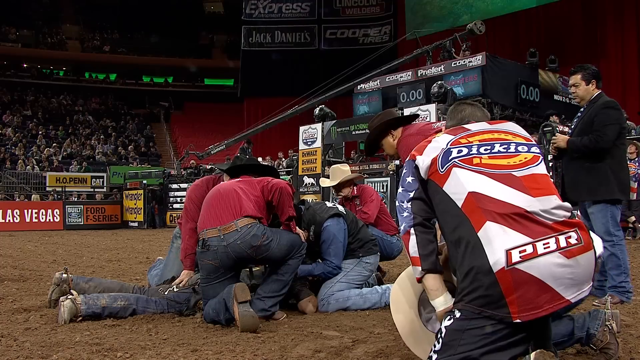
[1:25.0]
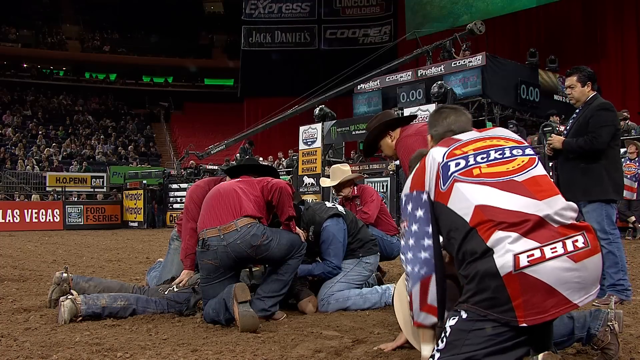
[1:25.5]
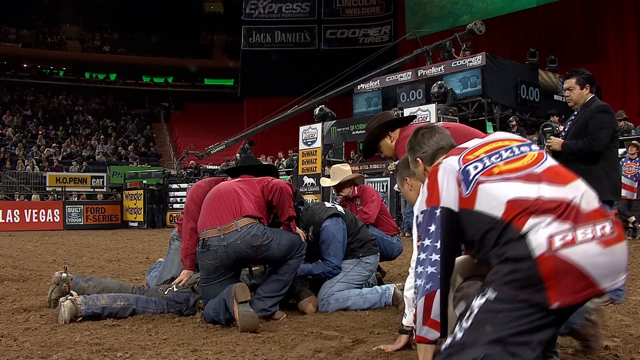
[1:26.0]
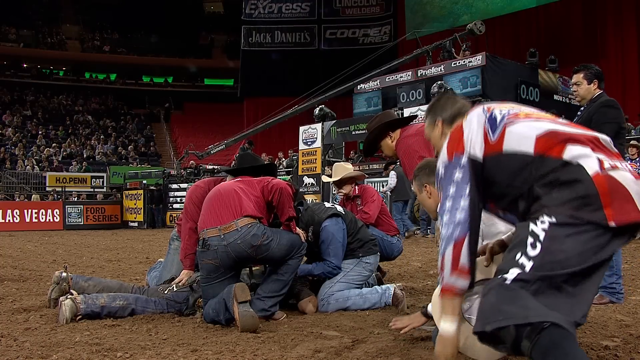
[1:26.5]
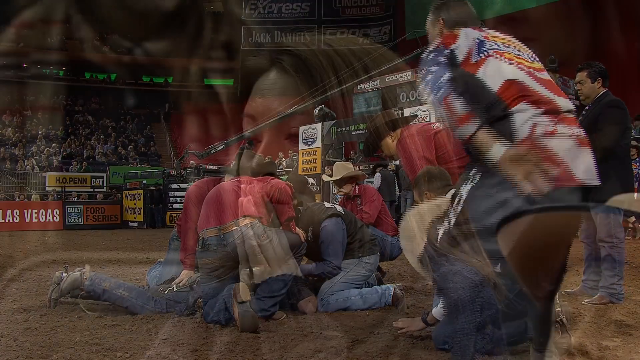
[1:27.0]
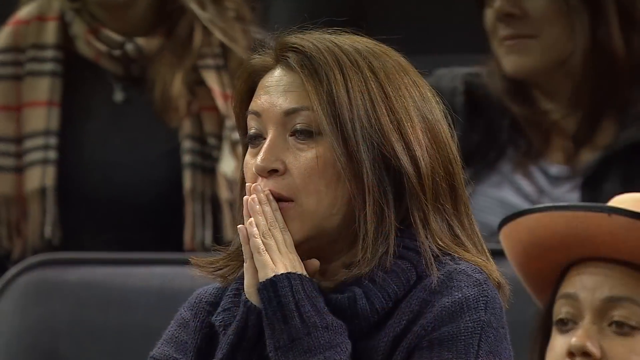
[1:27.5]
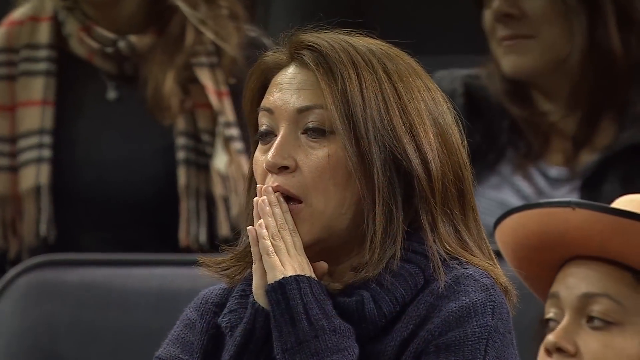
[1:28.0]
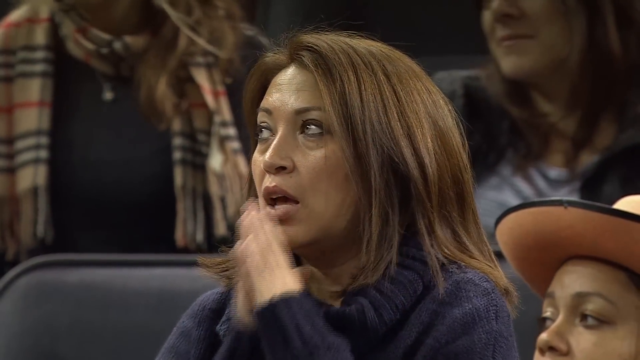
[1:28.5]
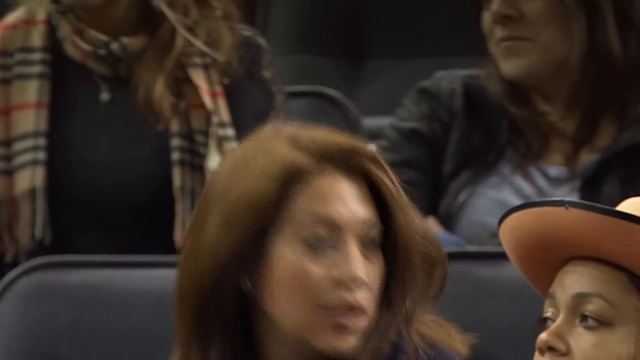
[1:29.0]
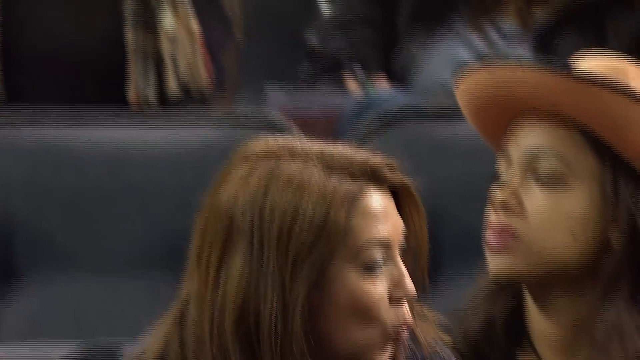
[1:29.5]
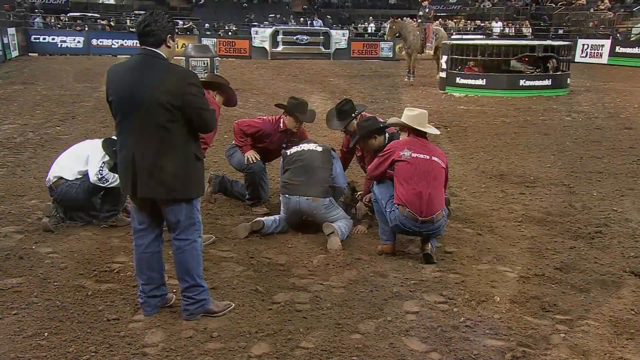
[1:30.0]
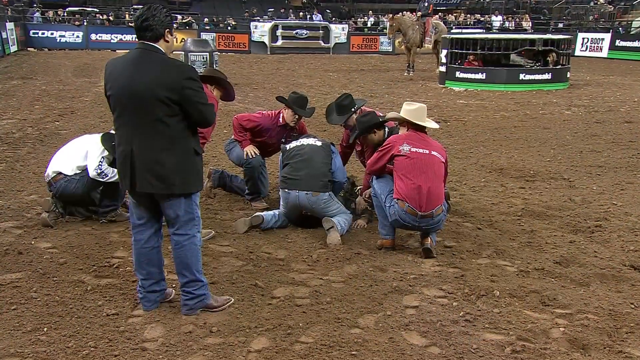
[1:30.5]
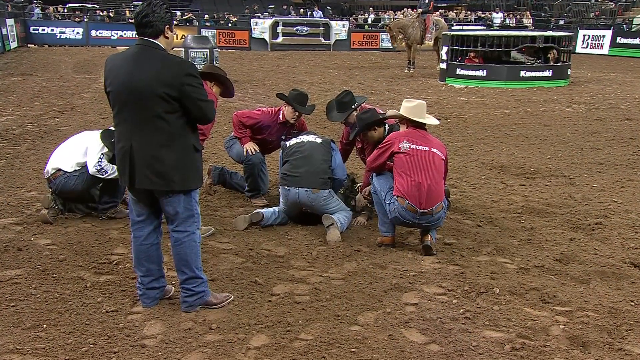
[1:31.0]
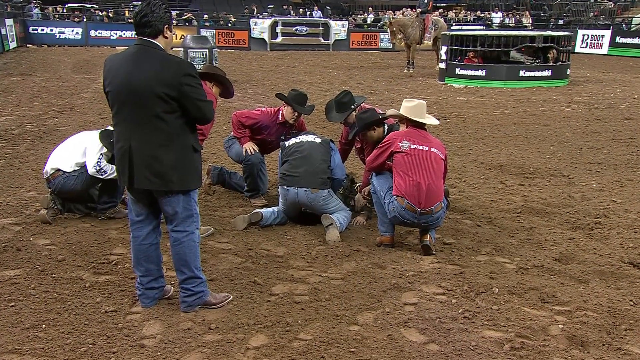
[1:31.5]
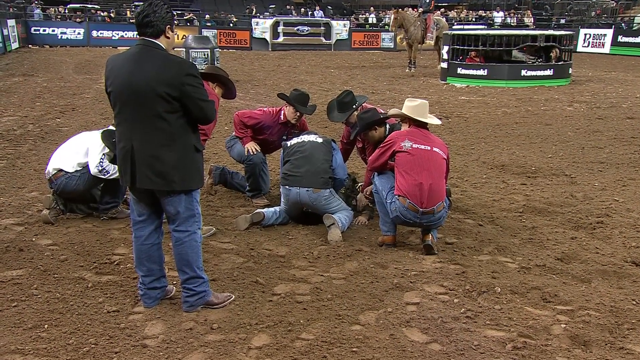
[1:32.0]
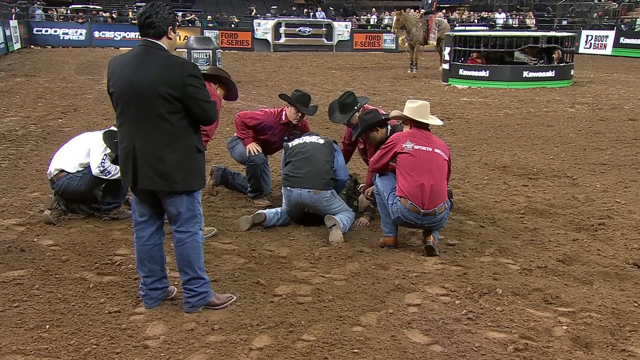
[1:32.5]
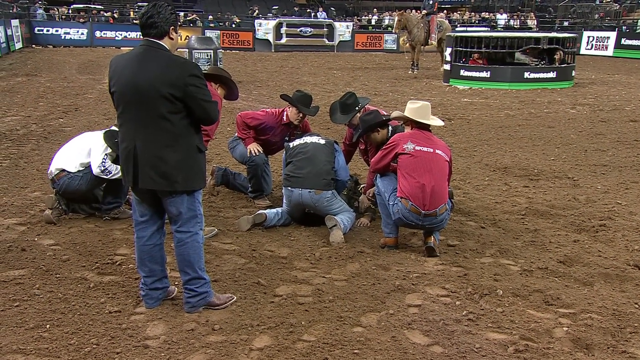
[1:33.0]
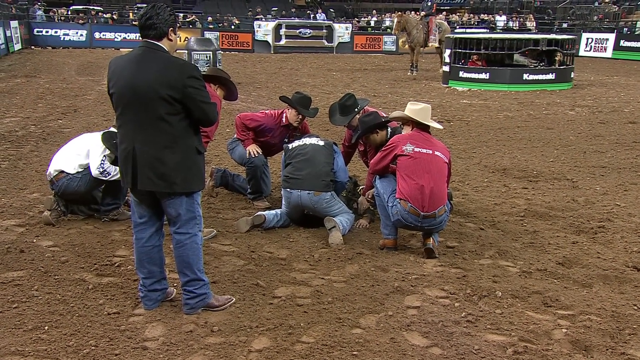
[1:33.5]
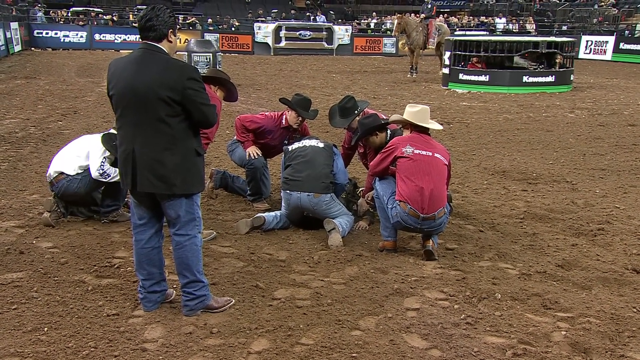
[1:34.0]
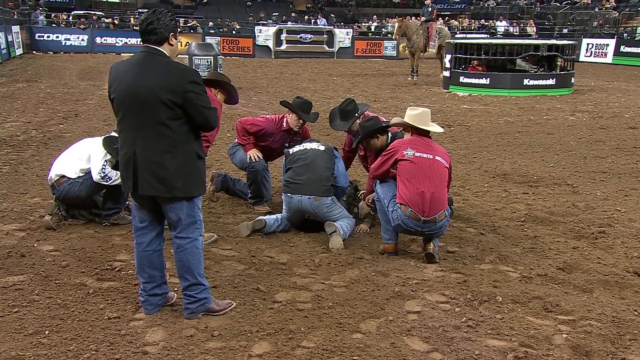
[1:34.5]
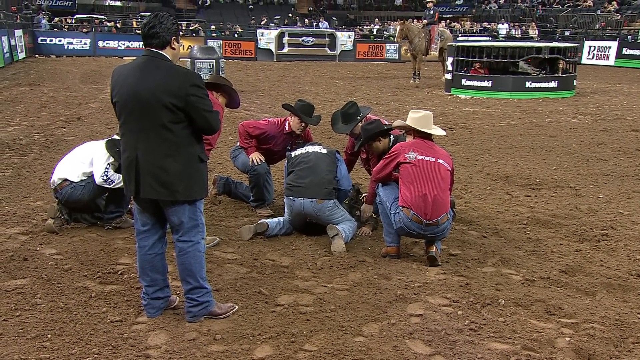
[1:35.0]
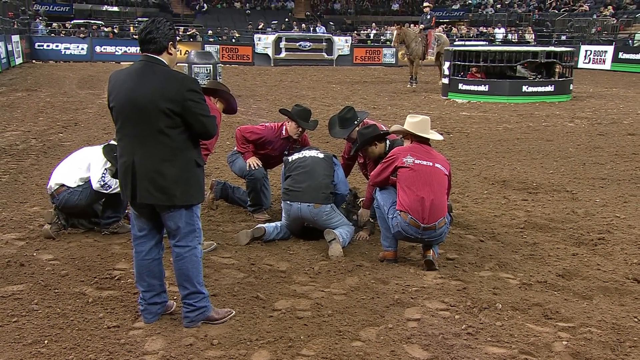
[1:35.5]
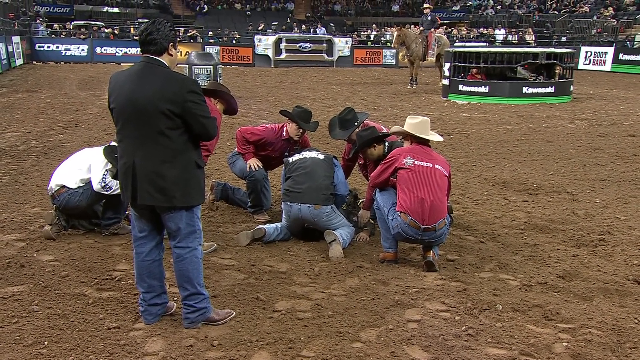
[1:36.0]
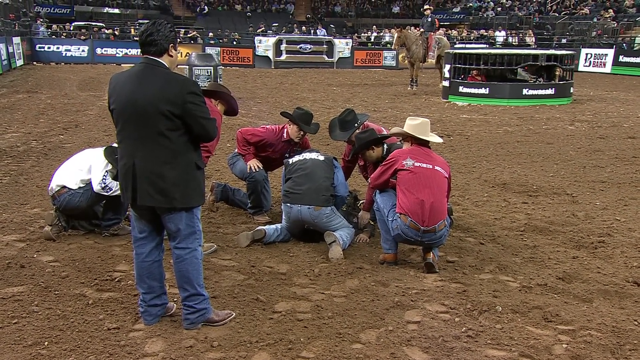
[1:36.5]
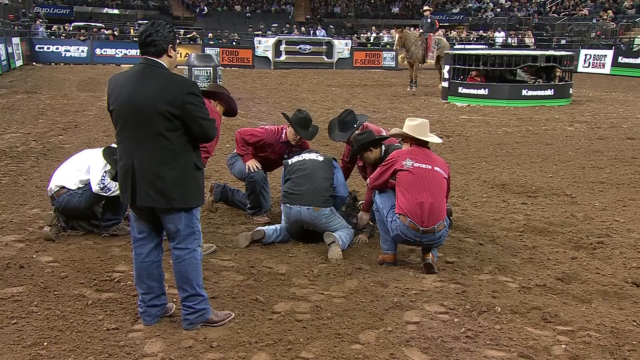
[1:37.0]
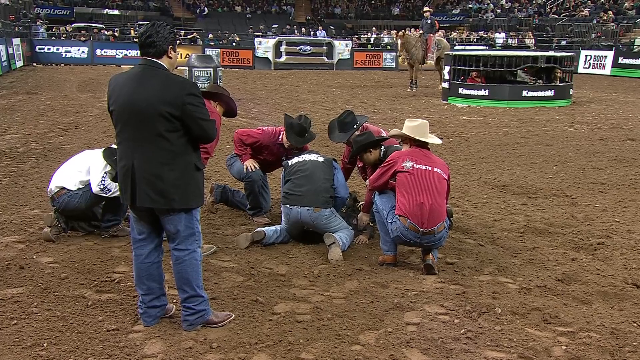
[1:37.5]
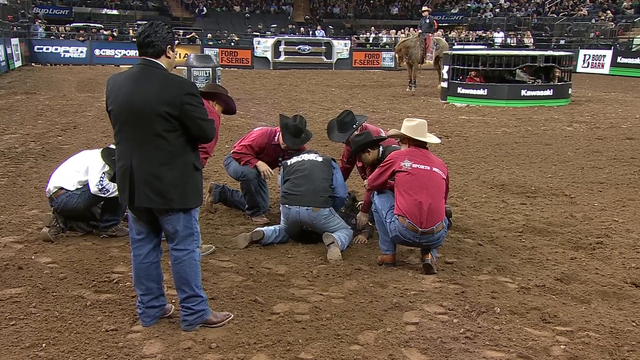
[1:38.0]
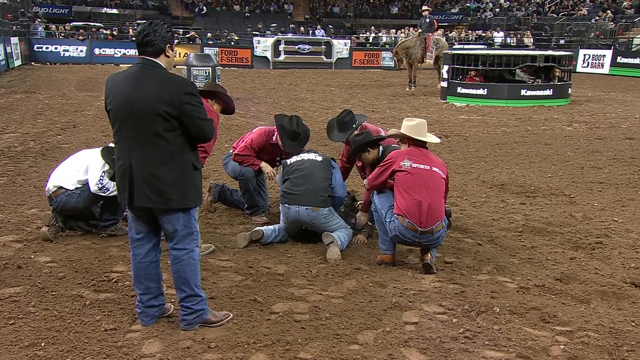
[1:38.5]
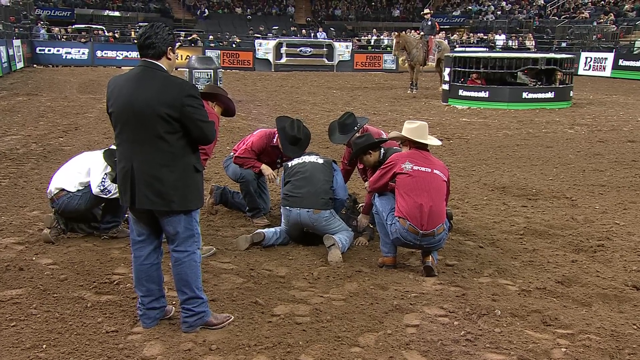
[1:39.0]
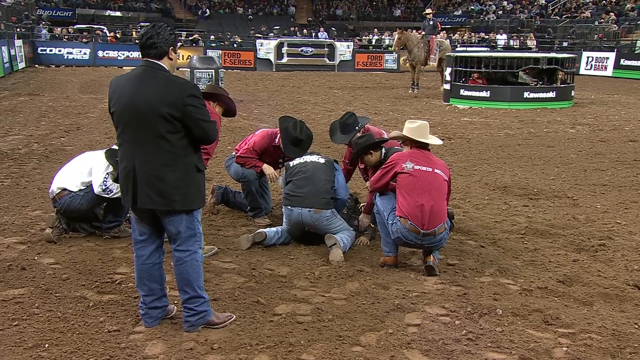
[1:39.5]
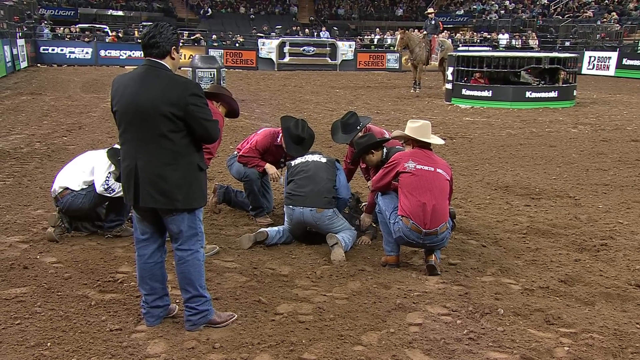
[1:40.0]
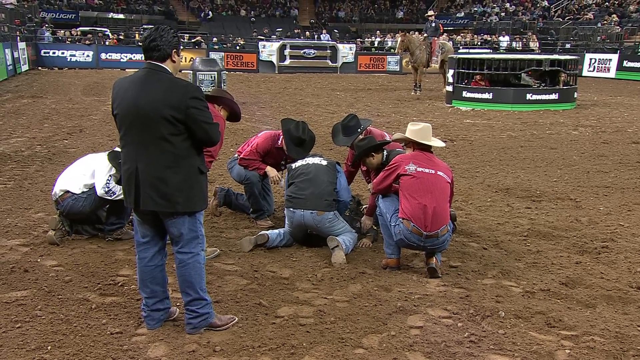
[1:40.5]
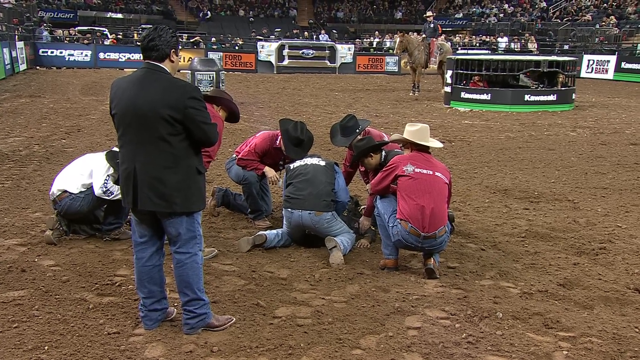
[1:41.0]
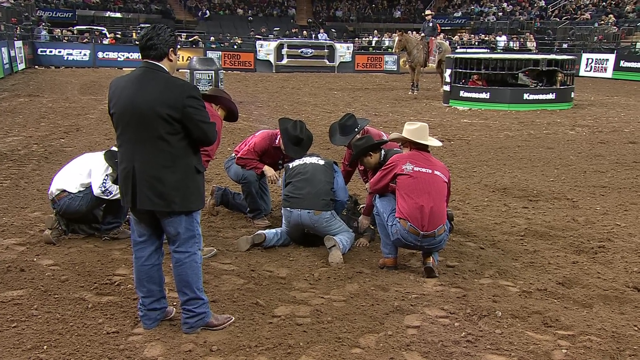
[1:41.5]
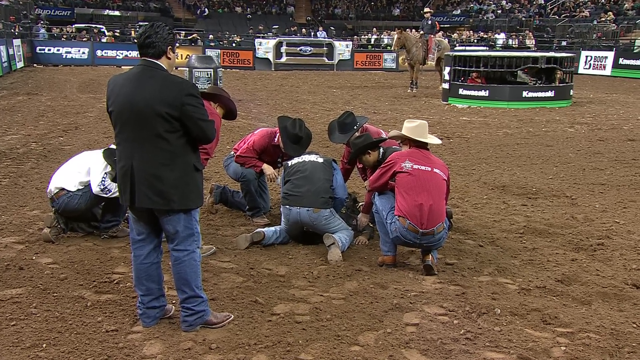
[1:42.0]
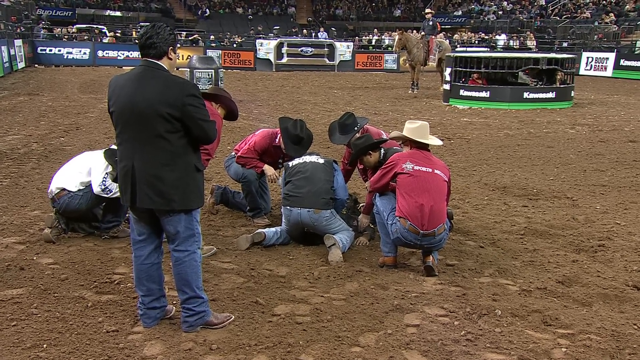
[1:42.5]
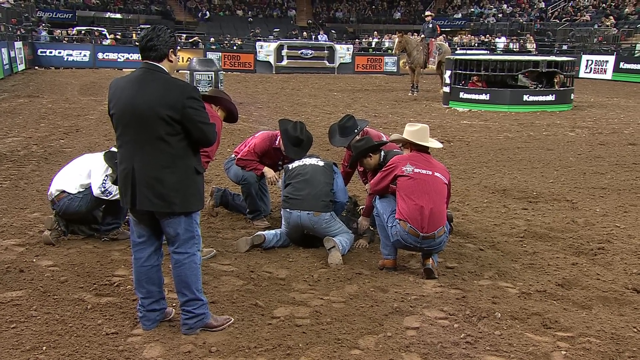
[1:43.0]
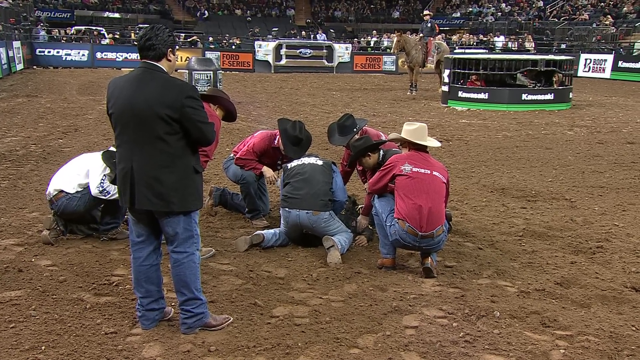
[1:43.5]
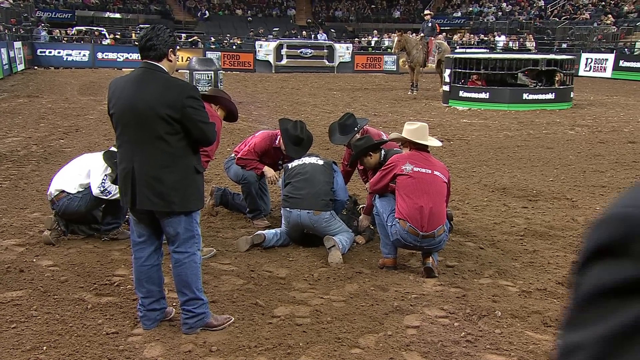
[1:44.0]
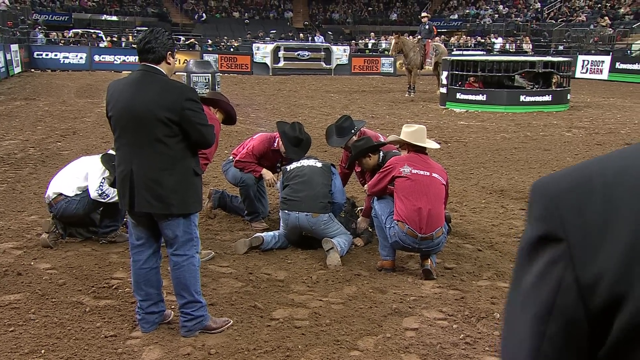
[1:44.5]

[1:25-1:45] The man is still lying on the floor, showing no signs of movement, so it is unclear whether he is conscious or passed out. A close-up shows a female audience member who looks very concerned, clasping her hands together as if in prayer. The video returns to the man on the floor, who still shows little sign of movement. In the background, a man on a horse surveys the scene. More advertisements are visible for the Ford F-Series, Kawasaki, Boot Barn and Bud Light.